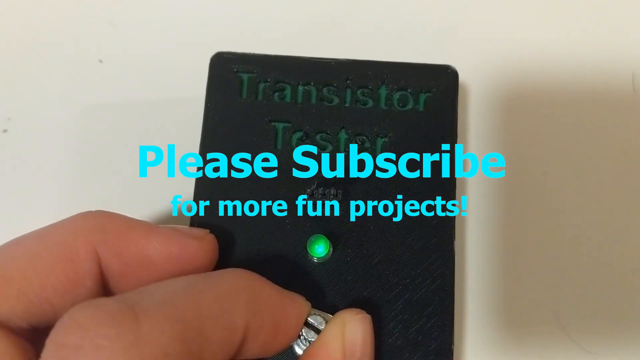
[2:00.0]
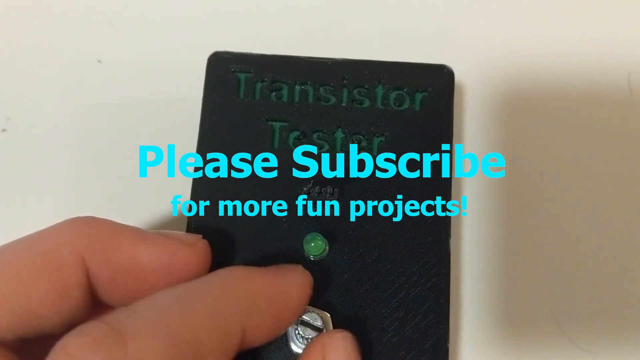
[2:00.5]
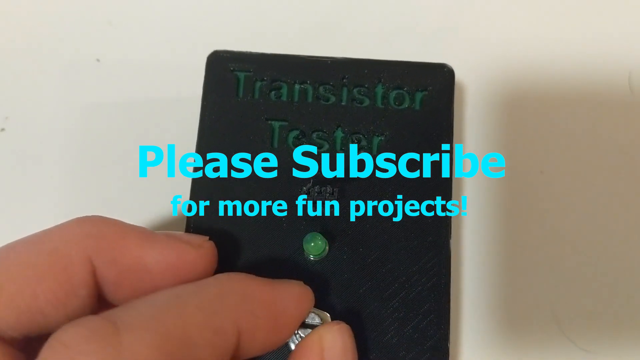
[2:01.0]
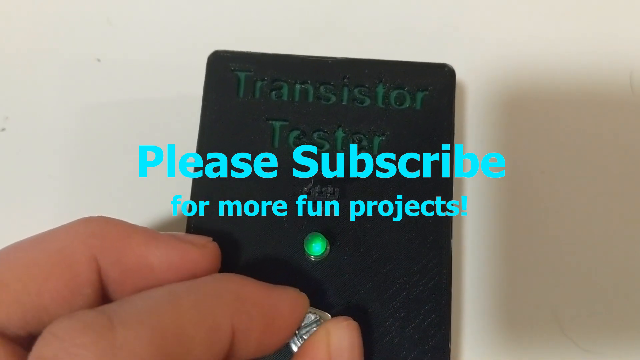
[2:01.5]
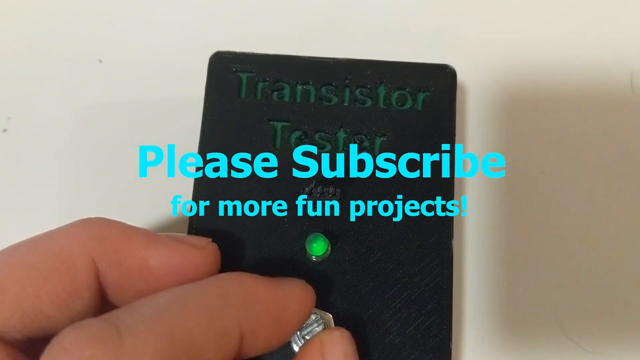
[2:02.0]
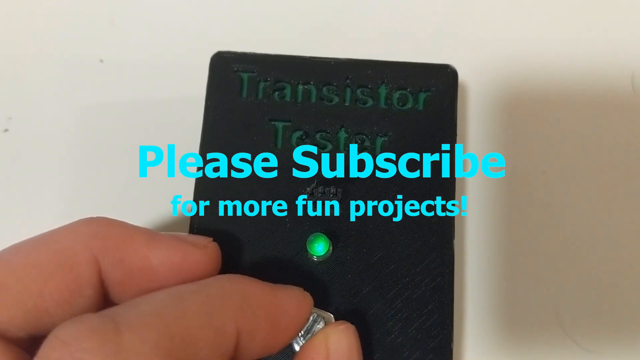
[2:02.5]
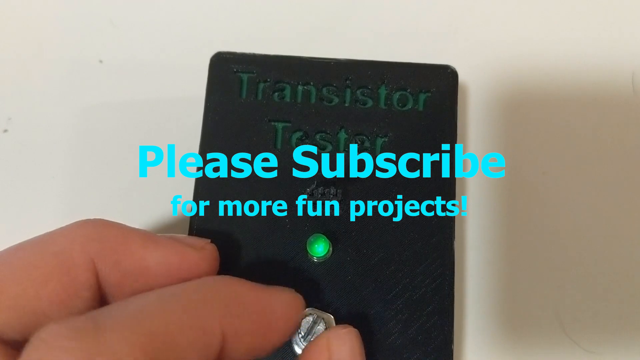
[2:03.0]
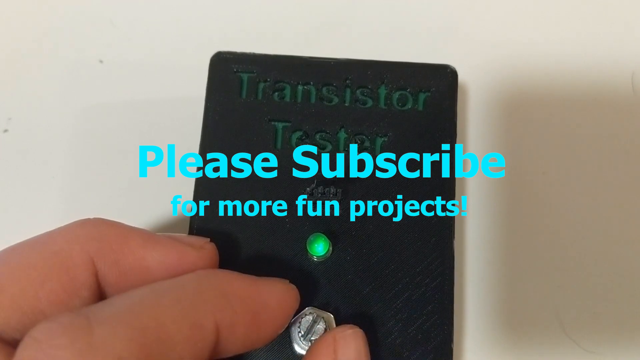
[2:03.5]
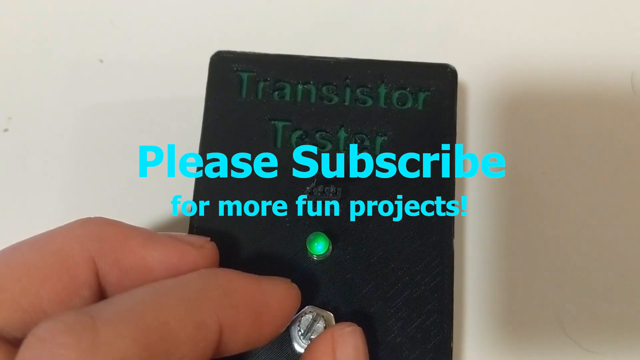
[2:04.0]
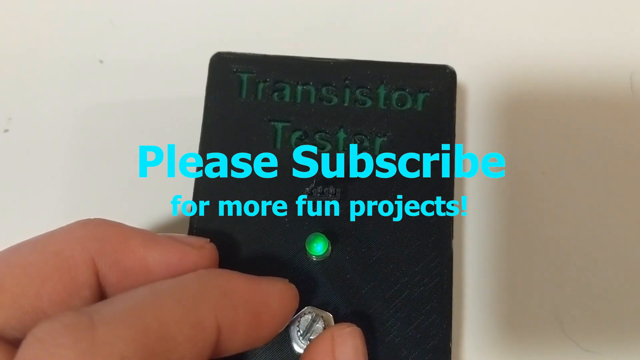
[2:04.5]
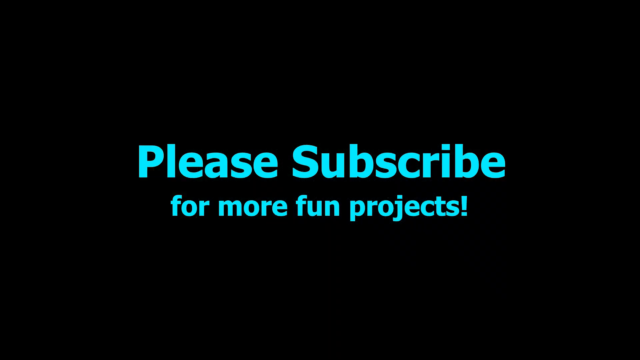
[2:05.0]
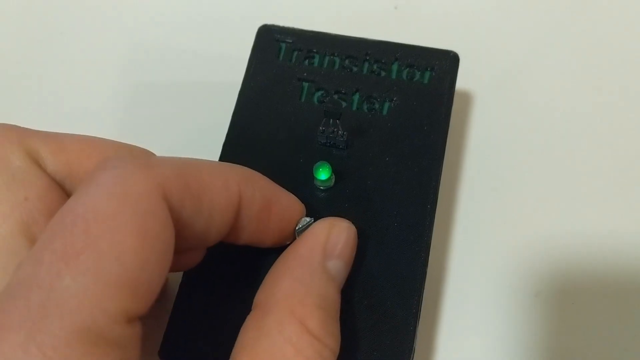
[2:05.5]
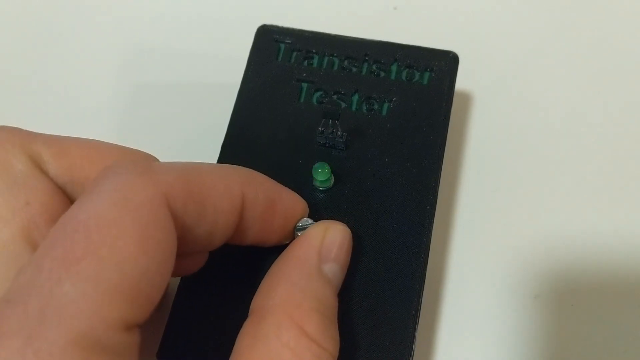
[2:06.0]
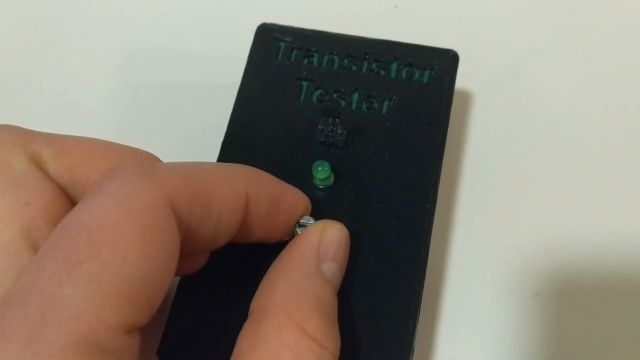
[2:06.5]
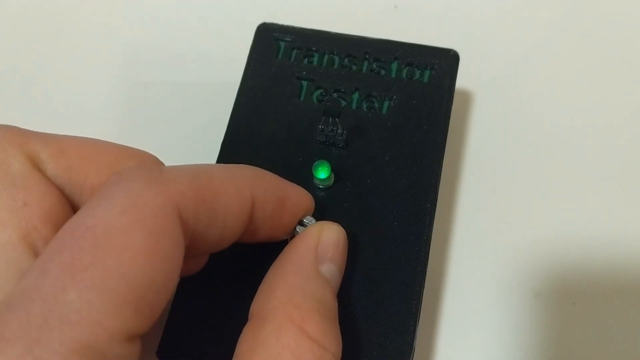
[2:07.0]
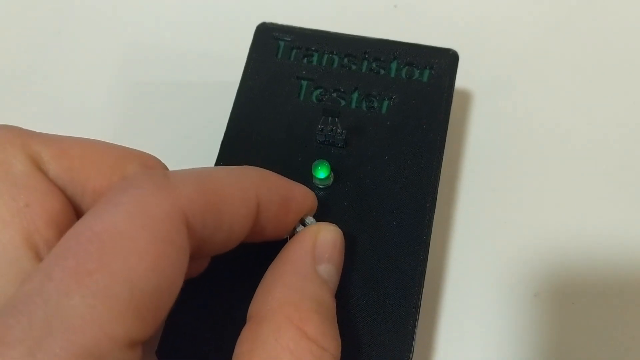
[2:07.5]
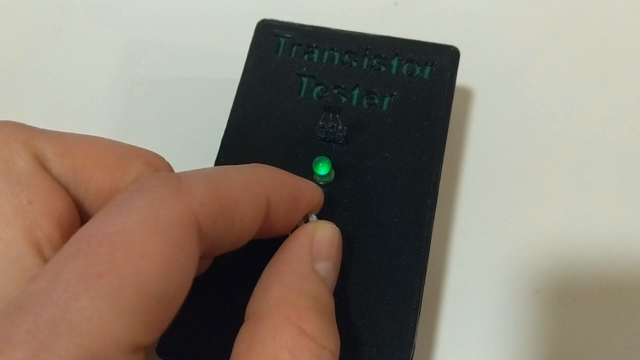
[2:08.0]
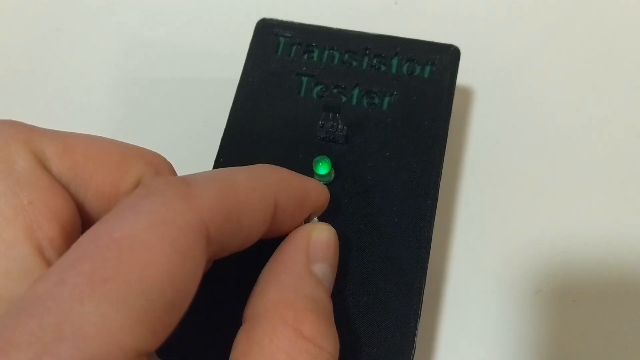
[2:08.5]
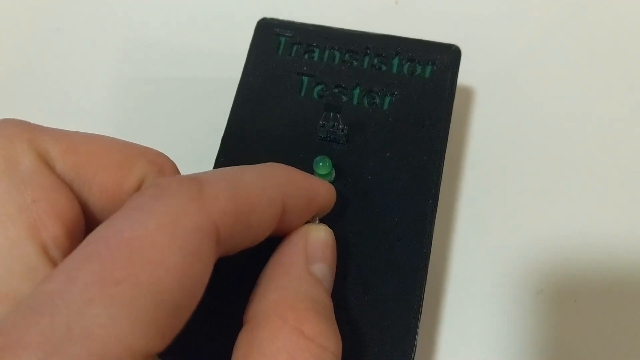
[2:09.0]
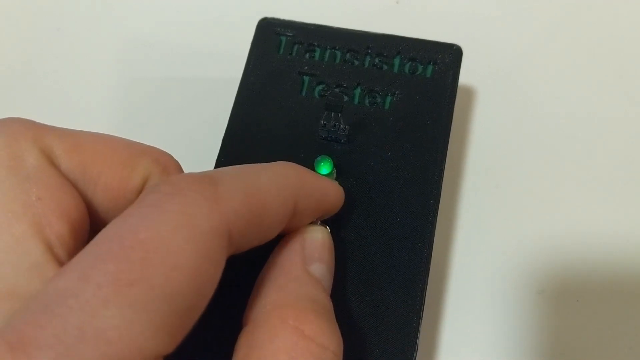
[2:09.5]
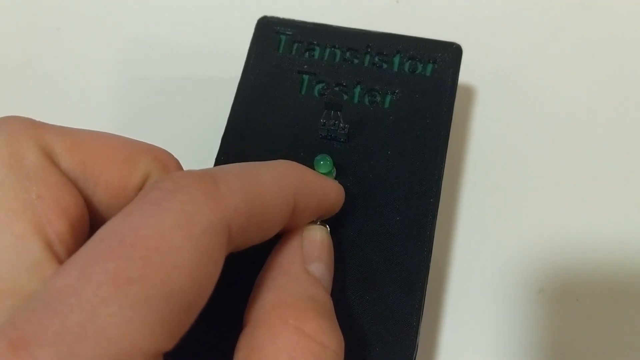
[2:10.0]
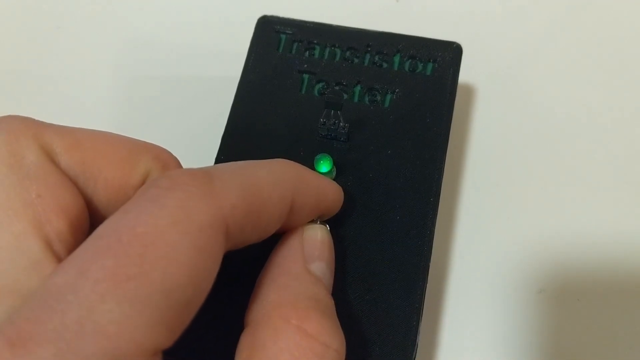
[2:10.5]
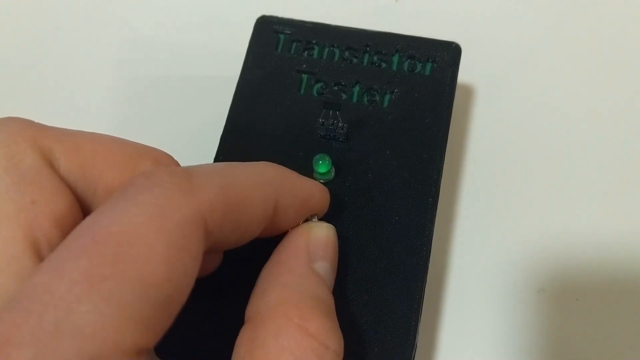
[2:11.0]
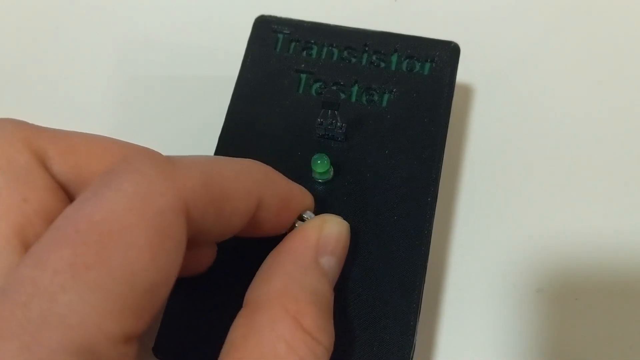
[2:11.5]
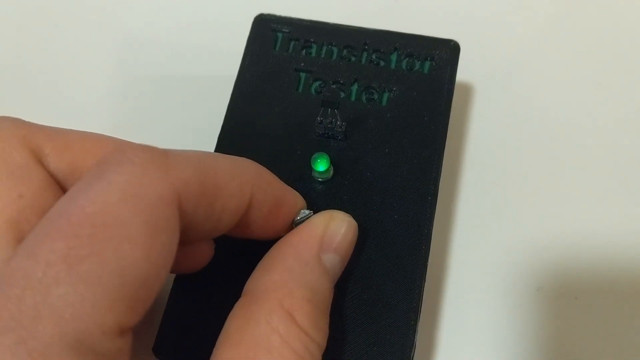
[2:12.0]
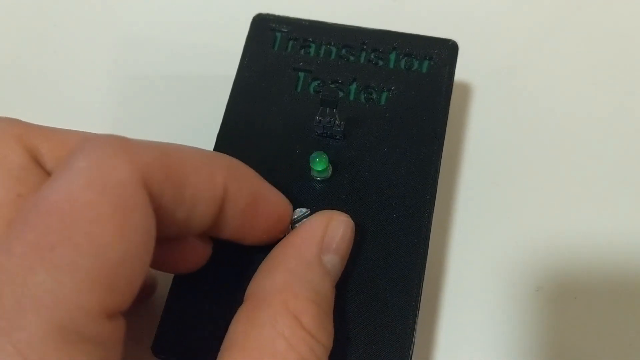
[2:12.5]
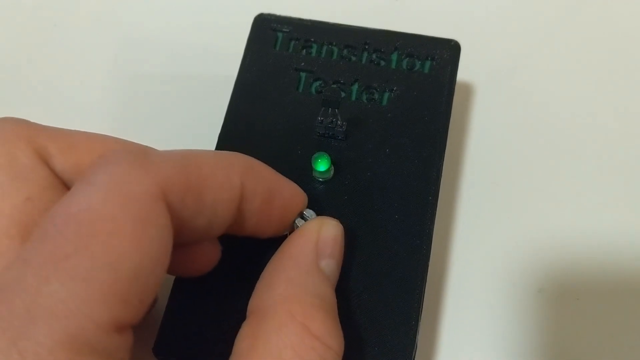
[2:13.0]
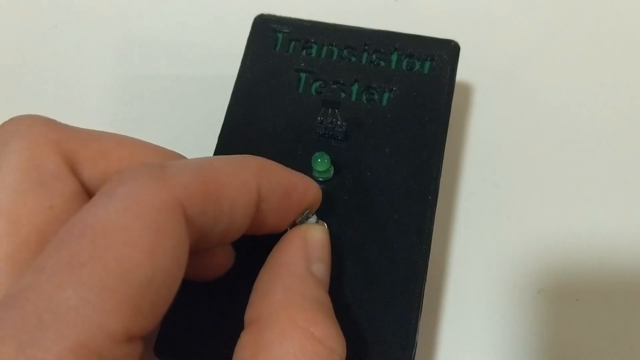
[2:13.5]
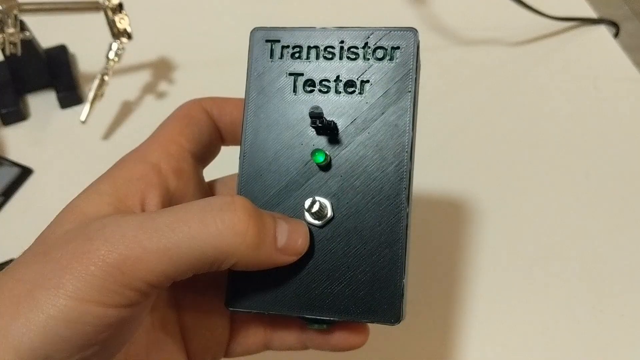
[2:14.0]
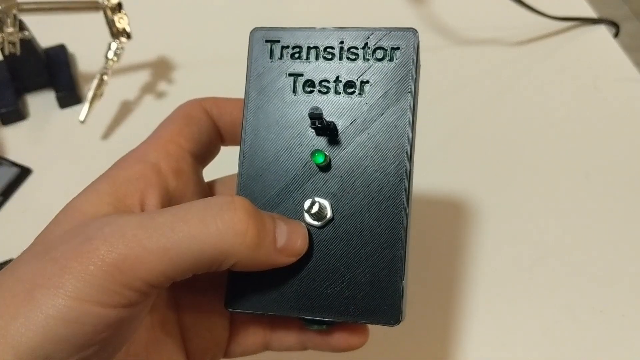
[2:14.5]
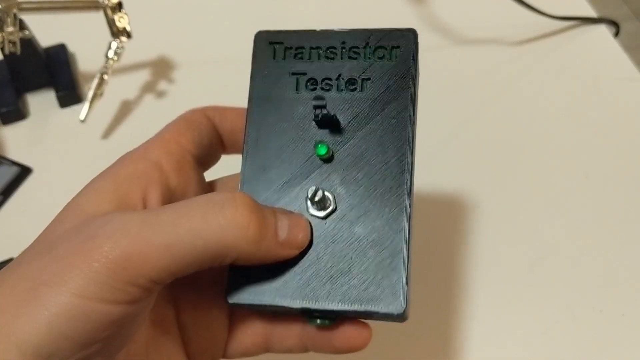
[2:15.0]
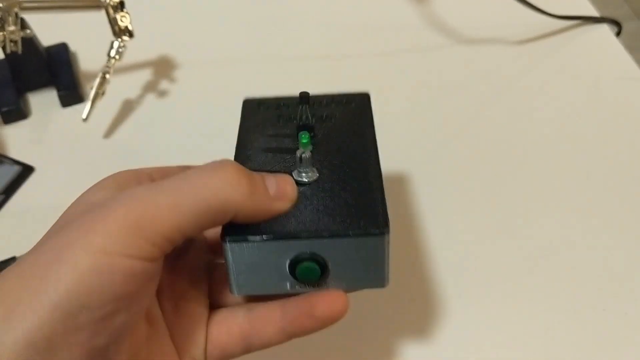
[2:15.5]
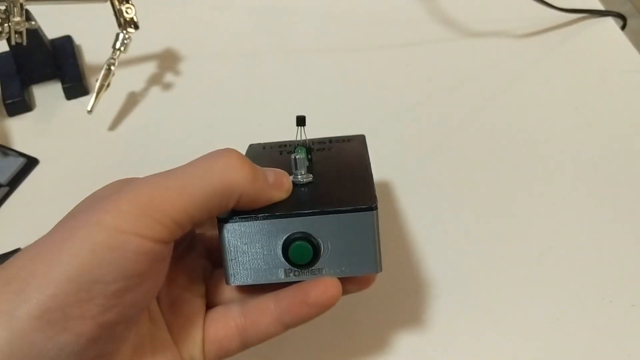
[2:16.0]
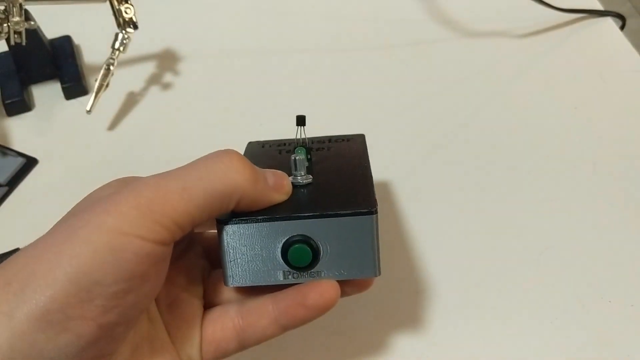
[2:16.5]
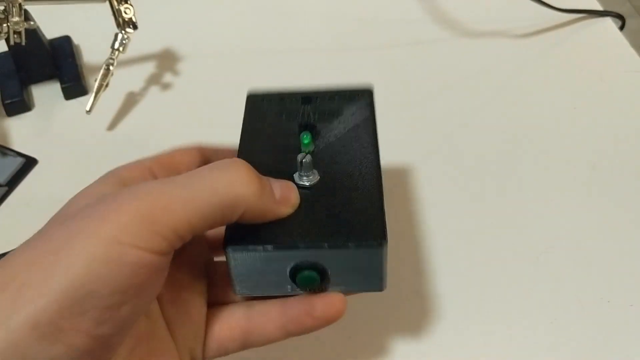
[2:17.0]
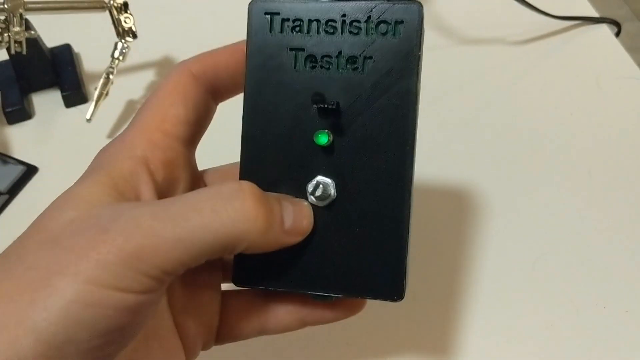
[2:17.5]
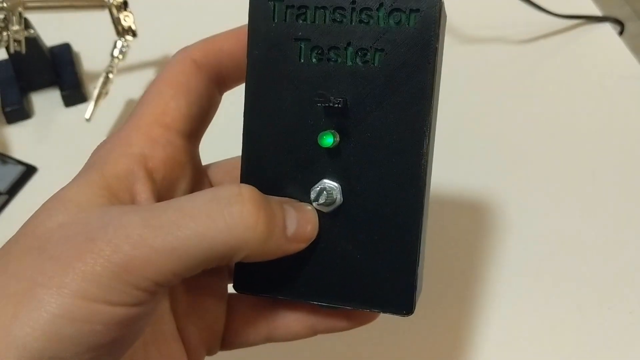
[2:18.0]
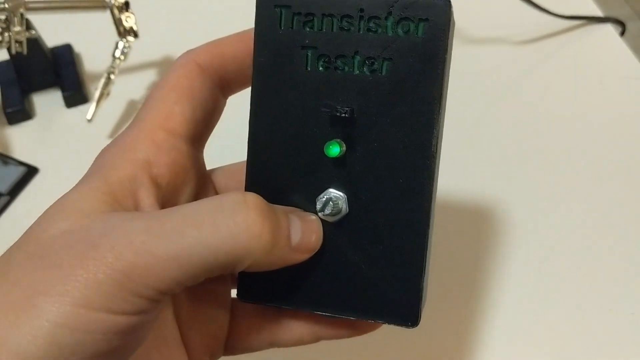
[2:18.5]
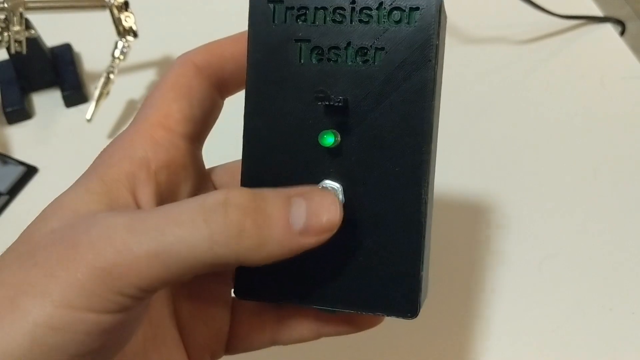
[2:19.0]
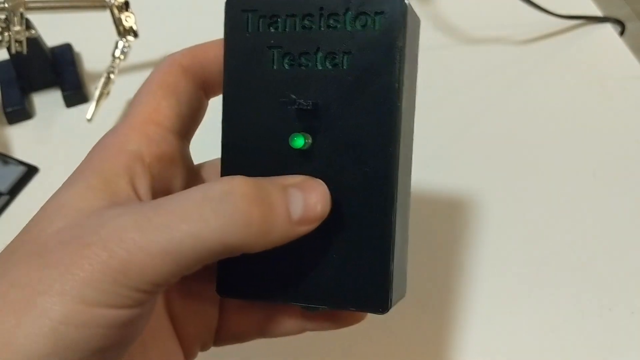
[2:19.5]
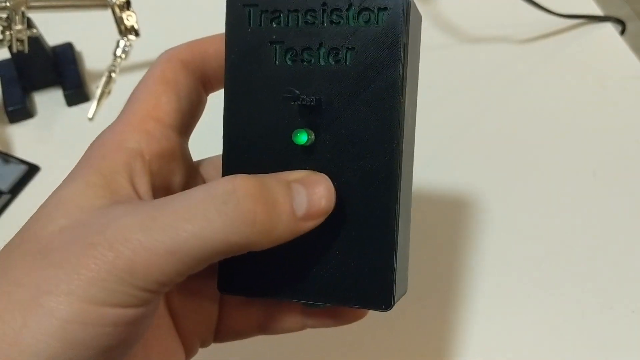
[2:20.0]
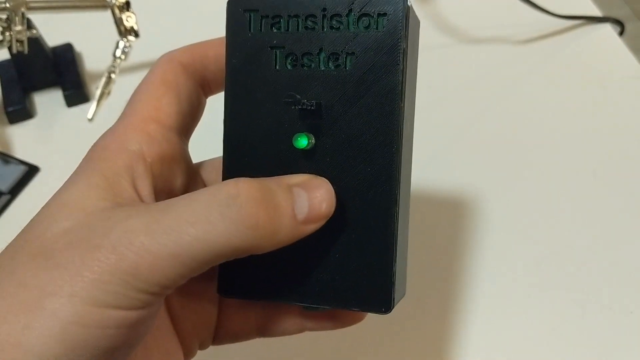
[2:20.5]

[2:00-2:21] Teal print reading "please subscribe for more fun projects" appears on top of a transistor tester. The nut and bolt on the front are adjusted, and the light flashes faster the tighter it is. The hand picking up the tester tips it downward and then back upward, showing the components of the transistor tester. The person's hand is fair-skinned, kind of like Caucasian. The table in the background that the tester is on is mostly white. At the very end, the video cuts to a black screen.